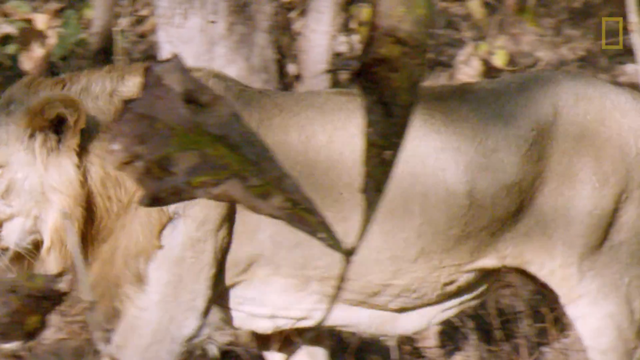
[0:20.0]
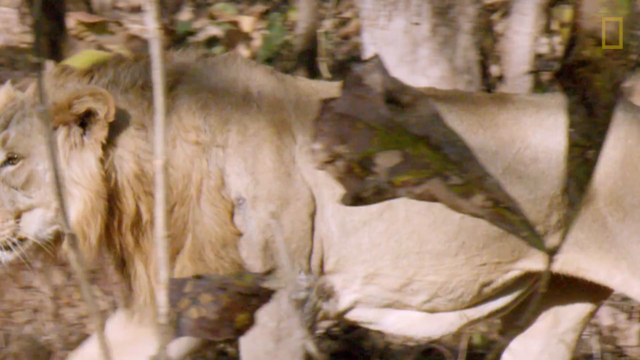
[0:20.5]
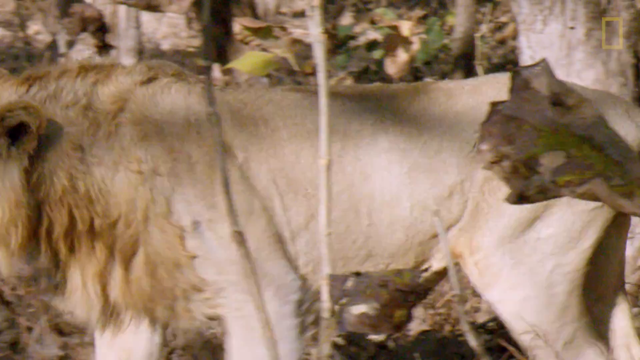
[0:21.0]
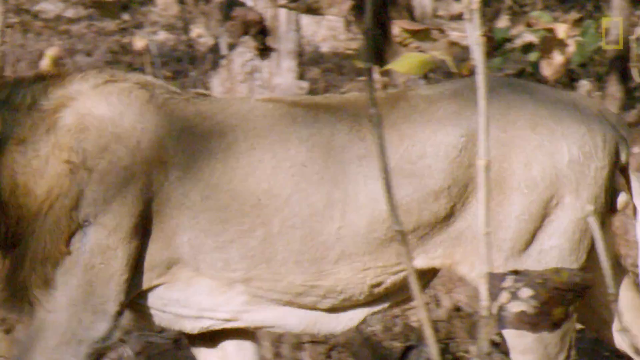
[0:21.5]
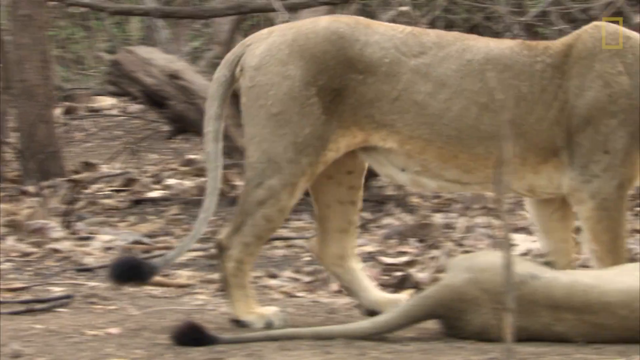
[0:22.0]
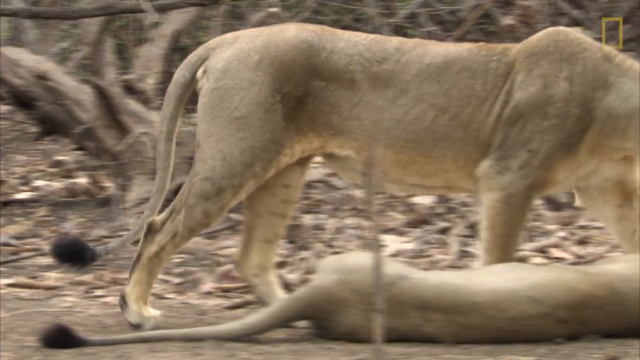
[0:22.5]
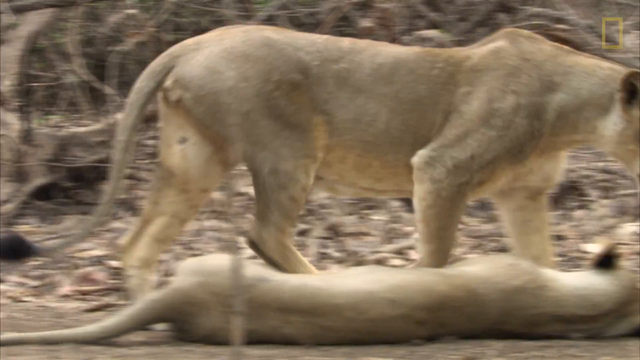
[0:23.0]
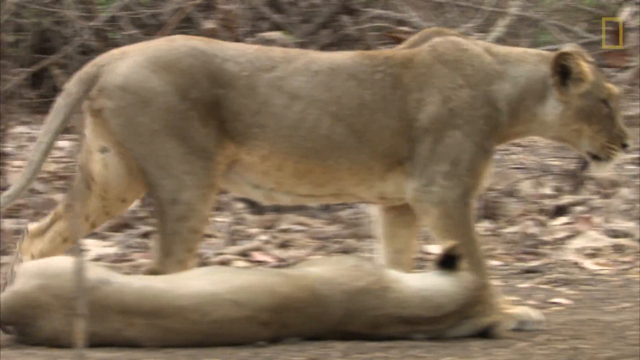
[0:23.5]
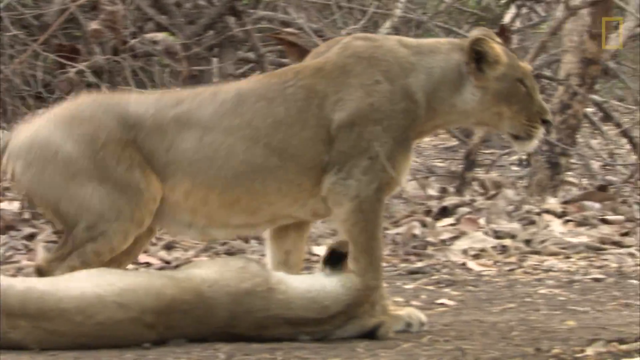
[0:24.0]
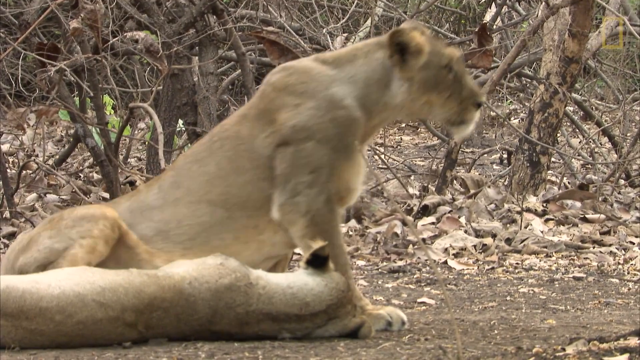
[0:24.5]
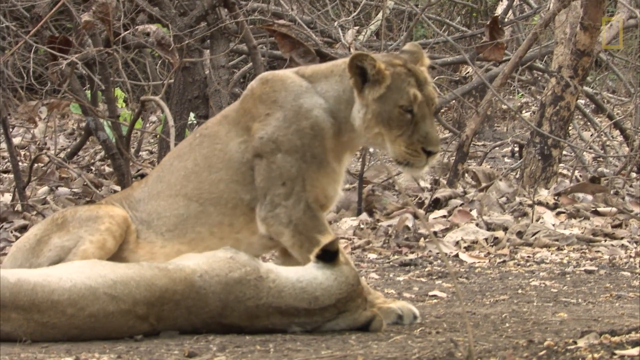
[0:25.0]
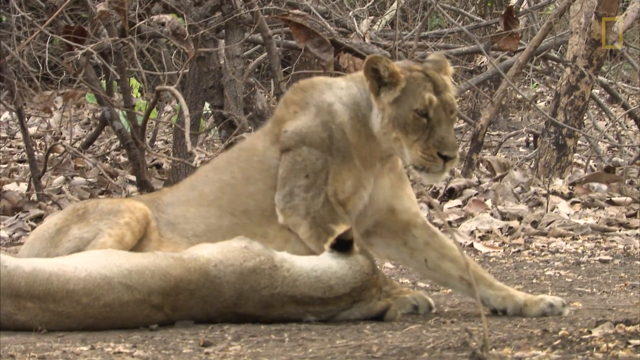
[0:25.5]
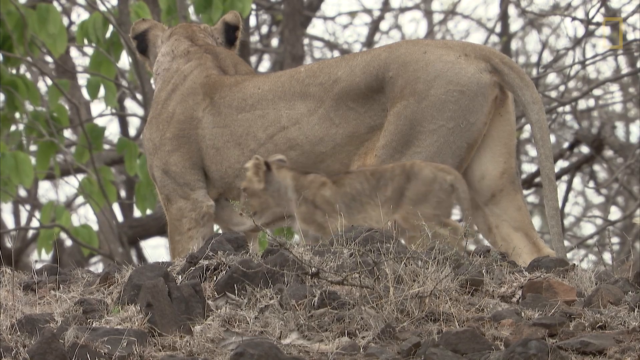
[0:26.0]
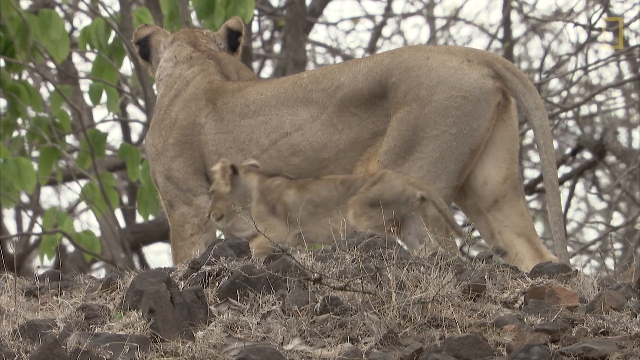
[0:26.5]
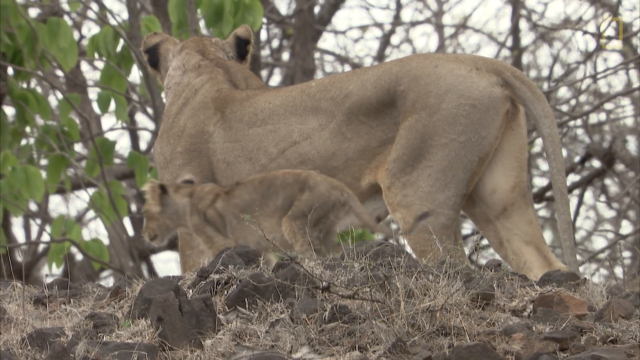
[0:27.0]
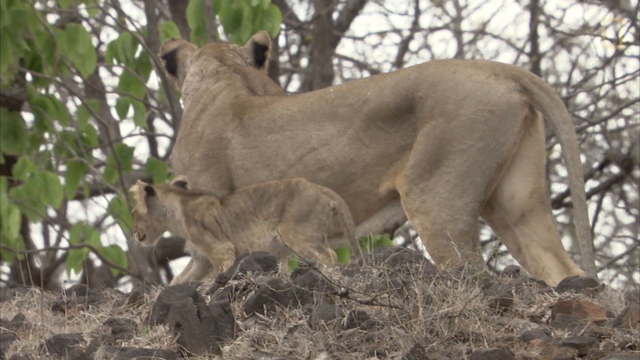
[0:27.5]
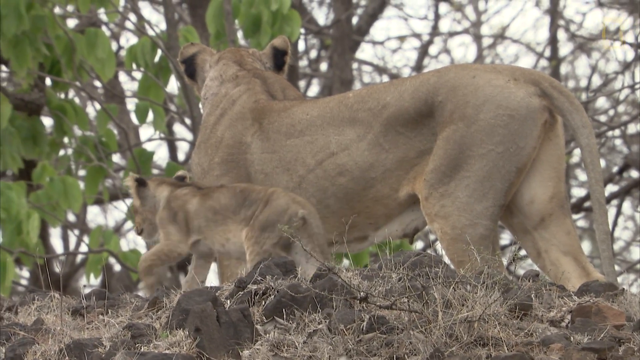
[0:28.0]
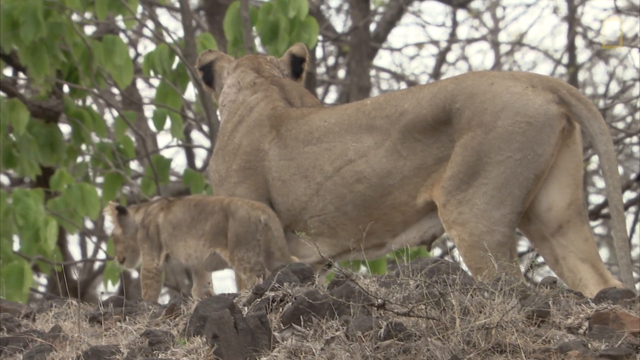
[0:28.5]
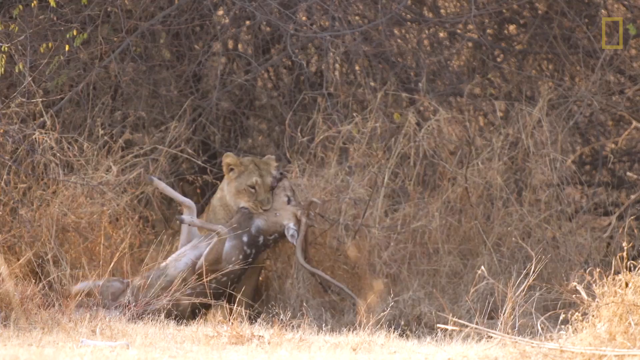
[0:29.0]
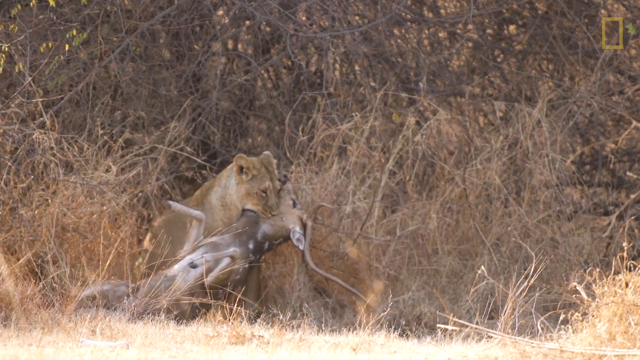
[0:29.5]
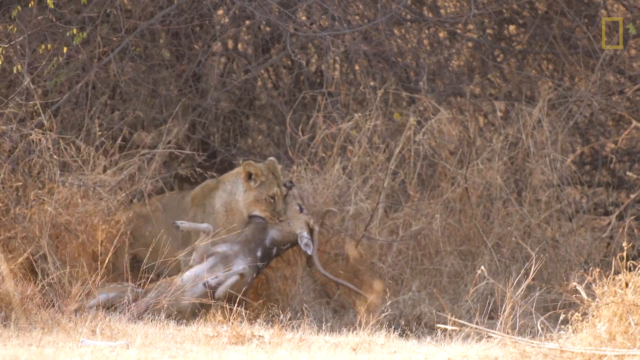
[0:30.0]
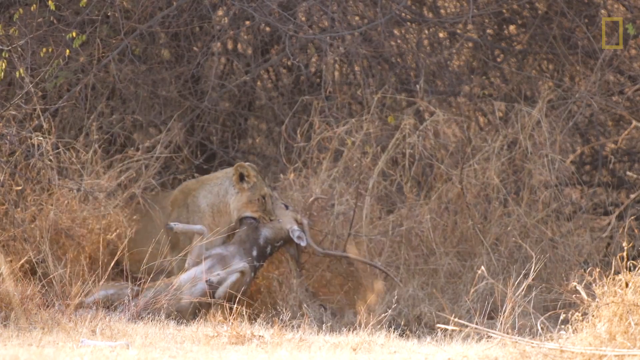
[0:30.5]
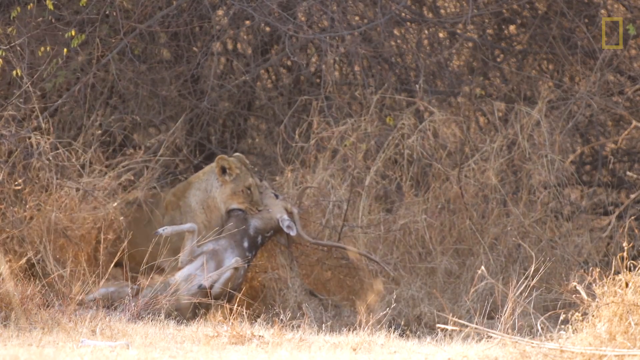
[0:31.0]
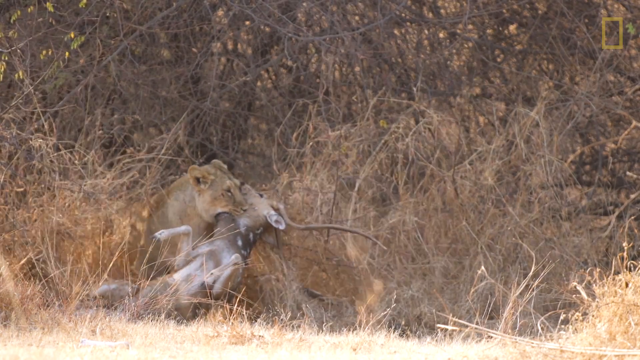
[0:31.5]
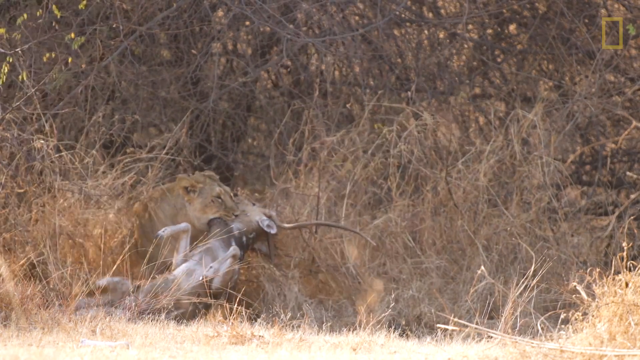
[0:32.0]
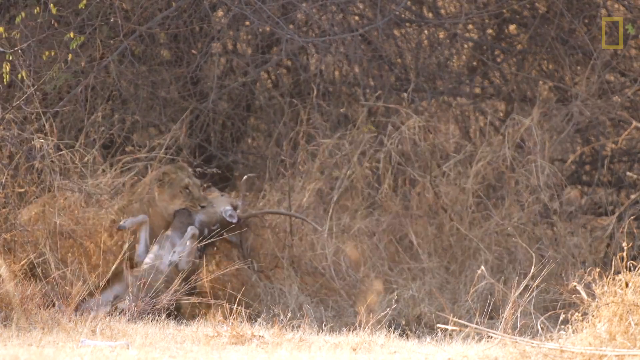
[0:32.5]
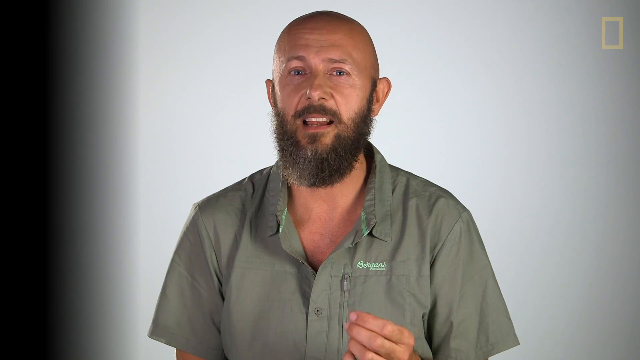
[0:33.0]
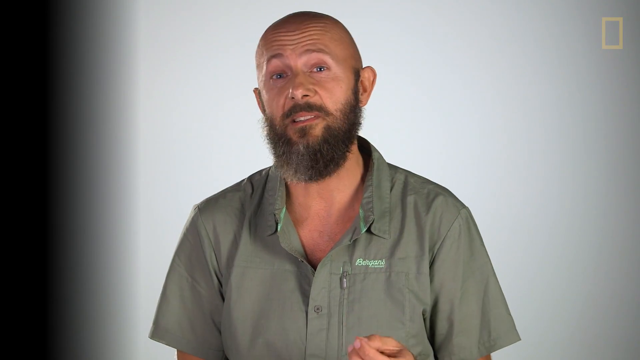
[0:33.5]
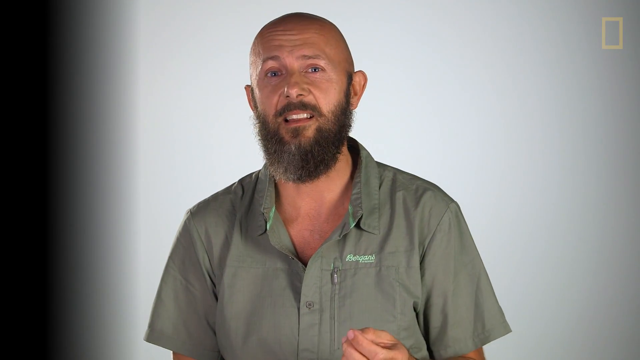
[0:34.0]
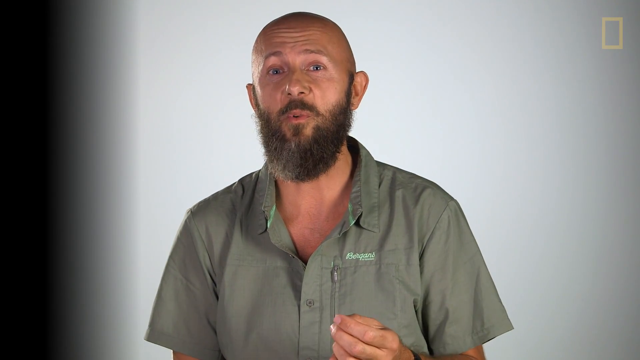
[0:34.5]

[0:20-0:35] Lions walk around, kind of playing leisurely. A baby lion appears, and a lion grabs a deer, presumably to eat it. The scene is very gray because of the setting, which is kind of a desert. At the end, the video cuts back to the man, the conservation photographer, who talks briefly.